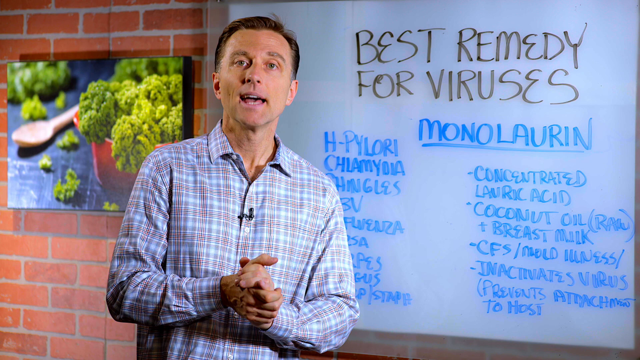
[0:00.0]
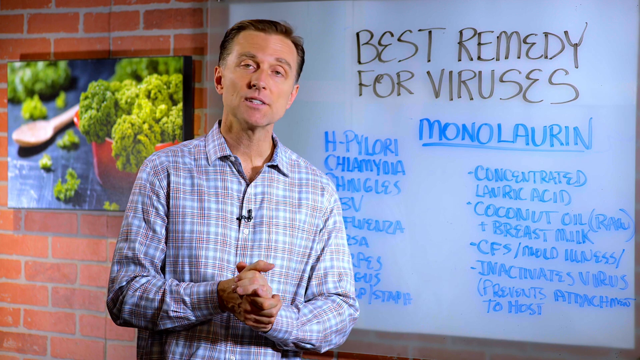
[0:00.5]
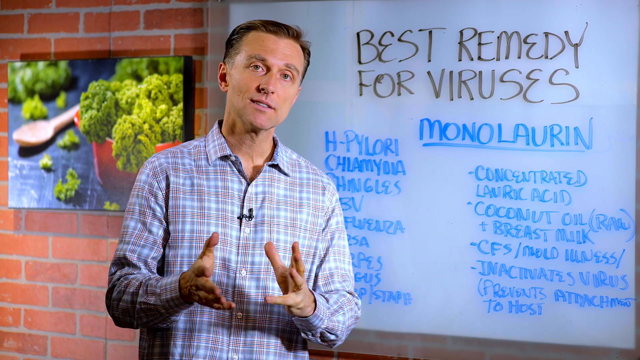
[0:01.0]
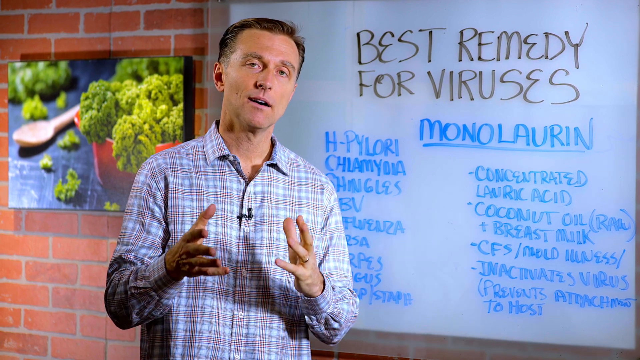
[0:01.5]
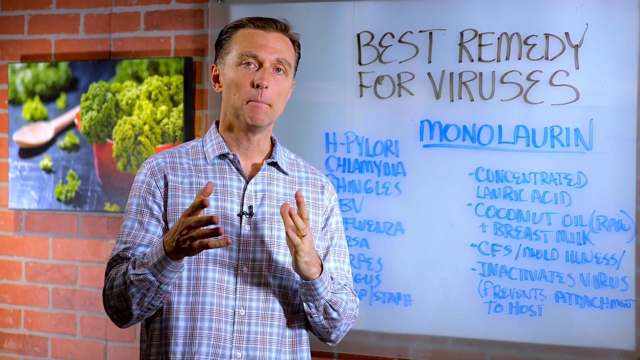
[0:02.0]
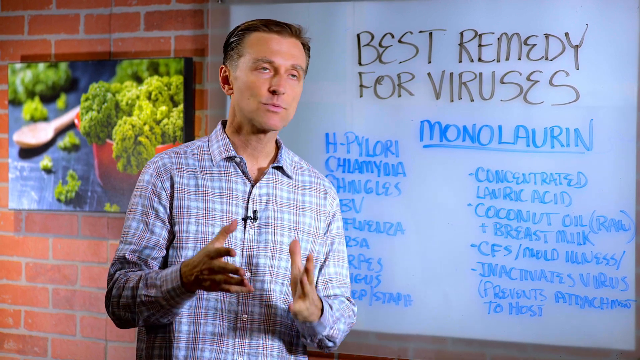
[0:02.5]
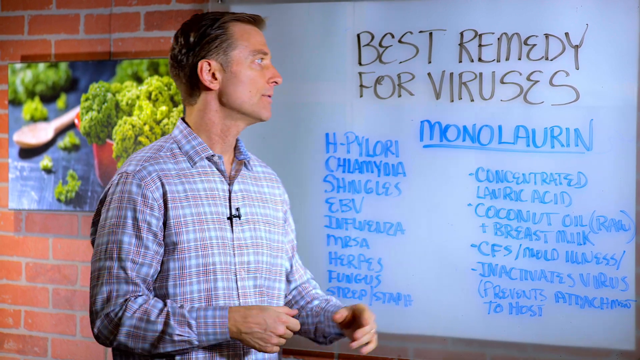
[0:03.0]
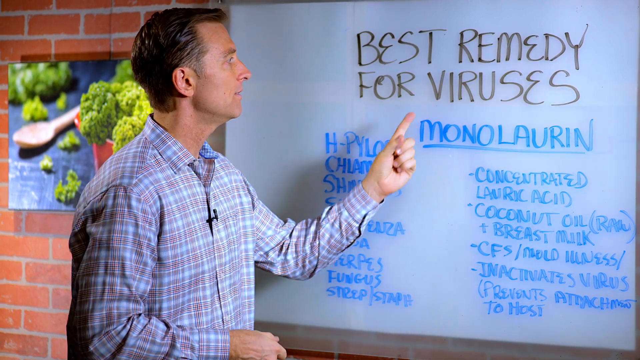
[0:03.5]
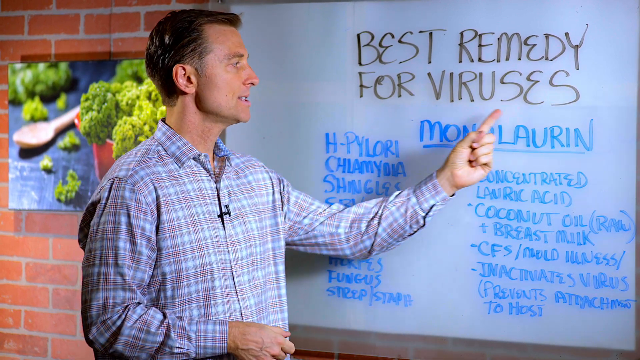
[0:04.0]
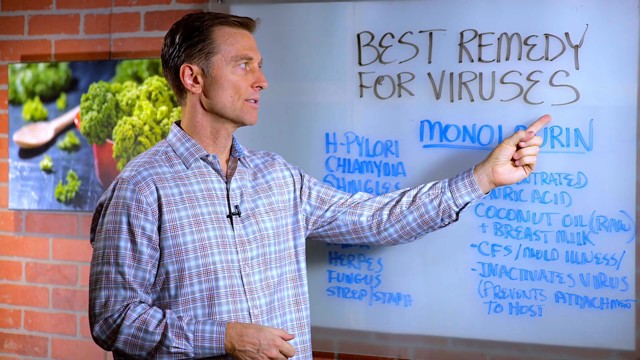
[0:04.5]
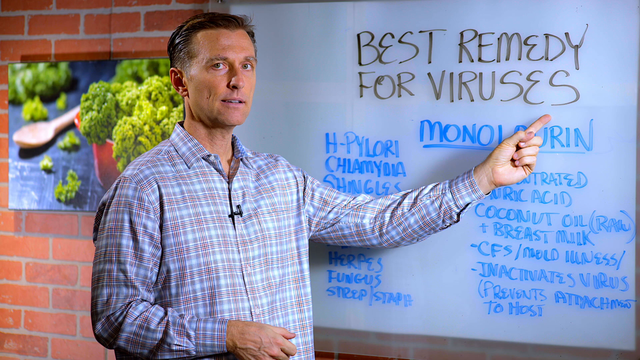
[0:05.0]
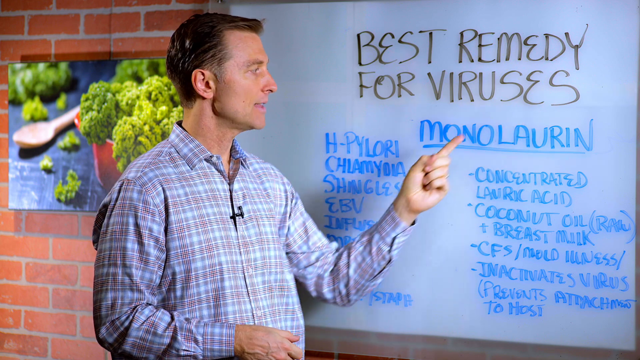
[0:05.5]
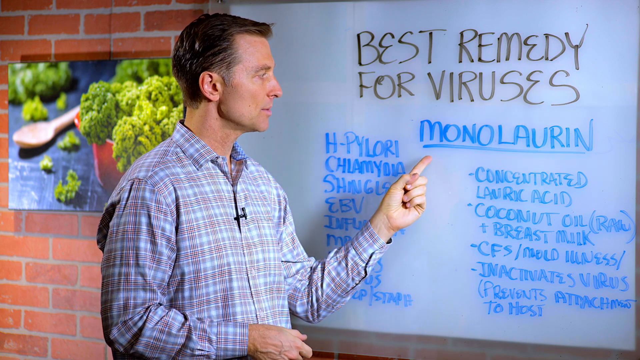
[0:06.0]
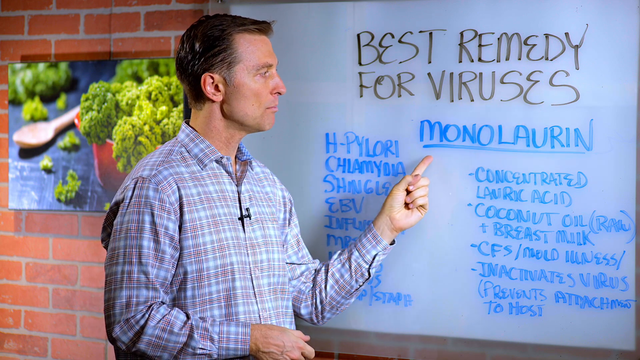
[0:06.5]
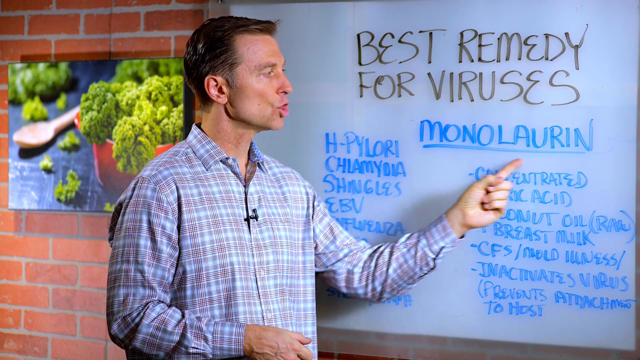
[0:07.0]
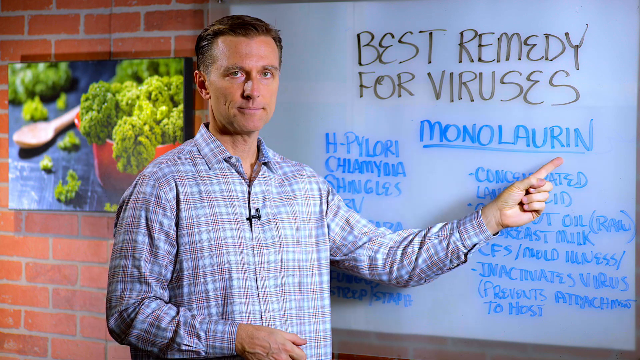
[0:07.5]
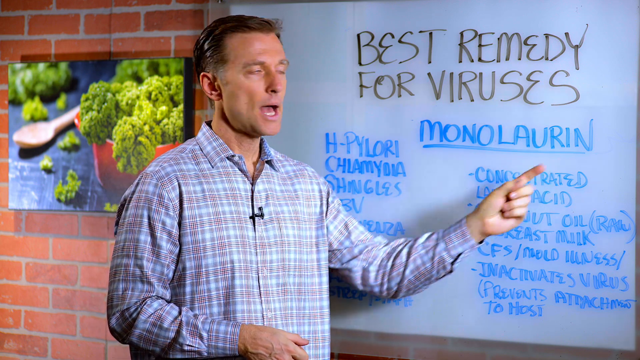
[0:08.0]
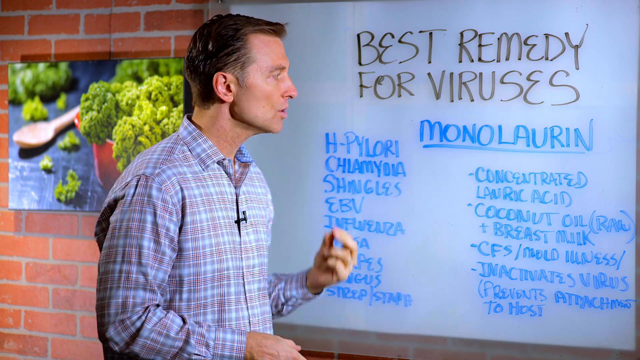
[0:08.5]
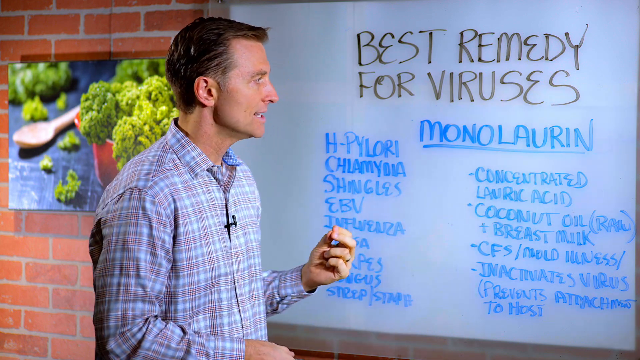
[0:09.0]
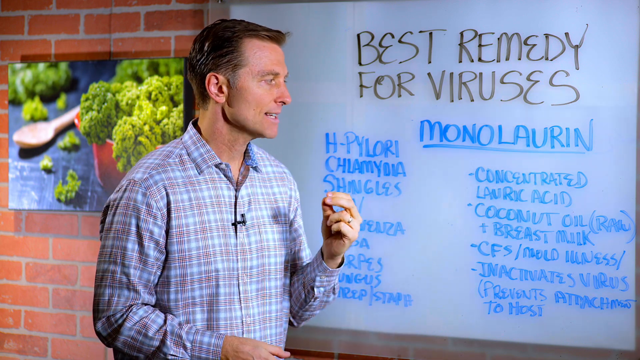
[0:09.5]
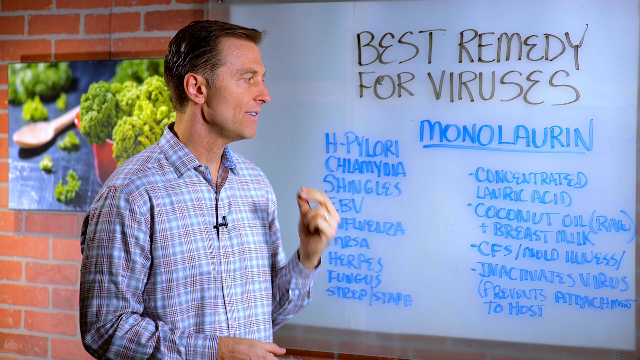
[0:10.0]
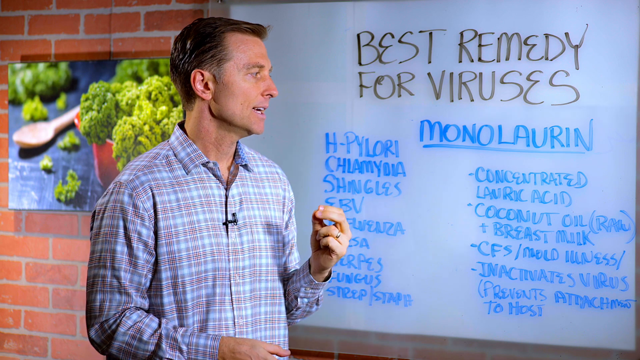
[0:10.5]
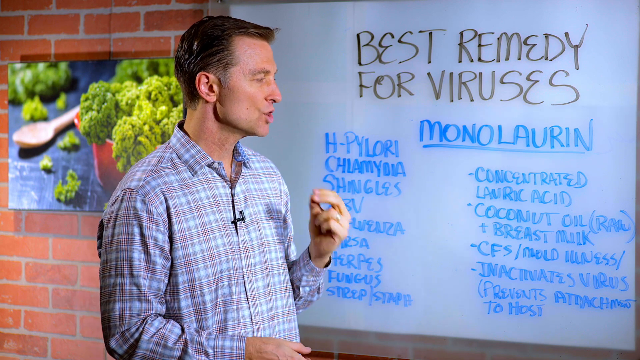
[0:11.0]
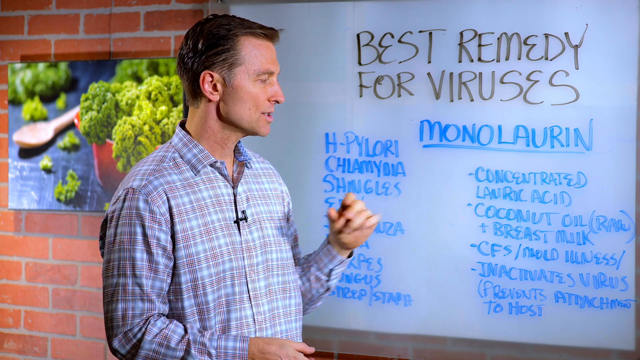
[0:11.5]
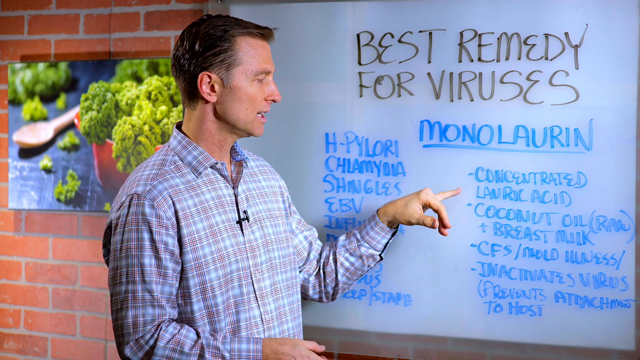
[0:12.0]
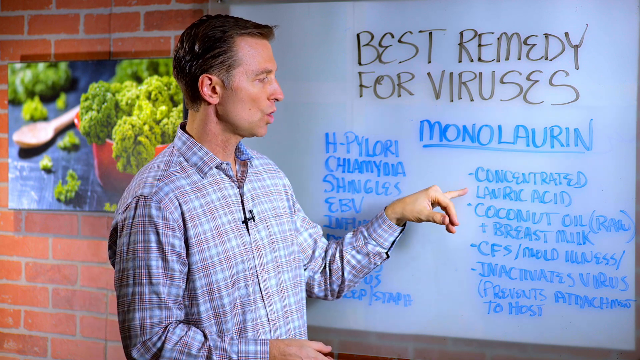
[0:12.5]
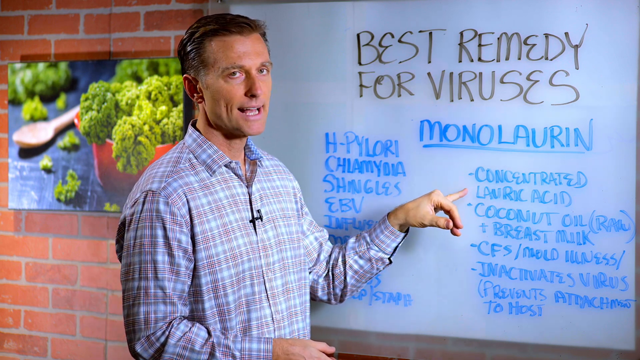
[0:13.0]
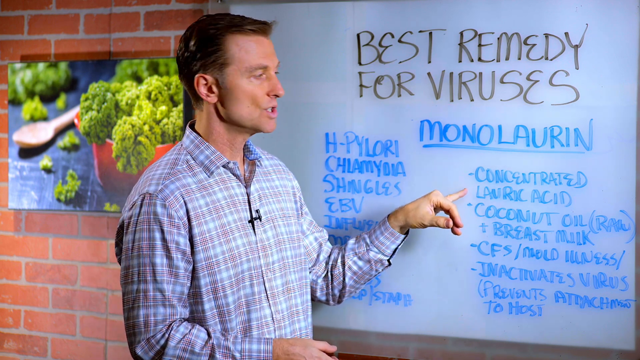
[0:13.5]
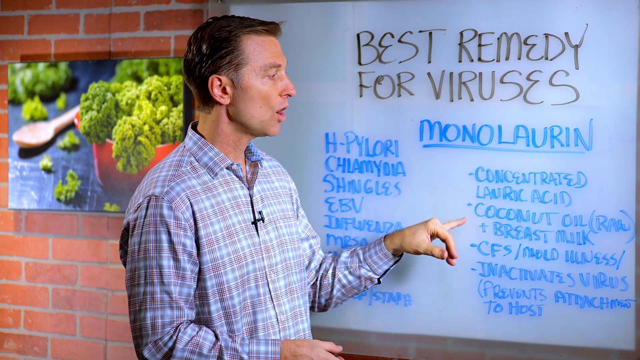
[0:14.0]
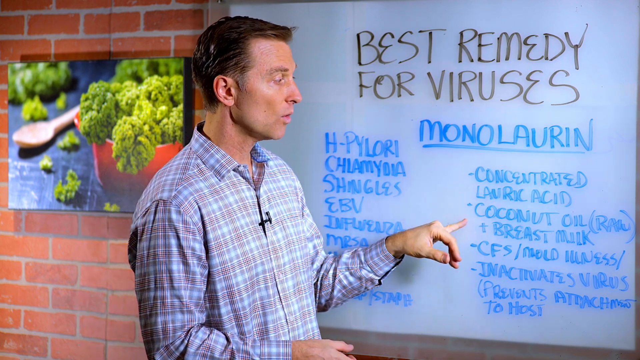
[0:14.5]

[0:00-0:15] A man in a plaid shirt, with a microphone hooked to the front, gives a lecture in front of a board headed "best remedy for viruses," written in black marker, with a list in blue marker under the word monolaurin. He talks with his hands at times and points with the pinky finger of his left hand, apparently to write or to point at different areas of the board. He sometimes looks at the camera and then back at his list. He stands in front of a brick wall with a picture of broccoli in a red bowl and a spoon. The setting looks like it is in front of a screen, almost as if he is teaching a lecture.